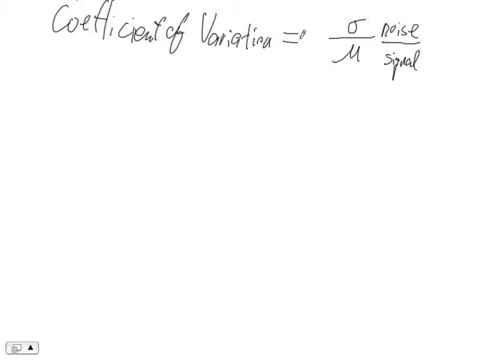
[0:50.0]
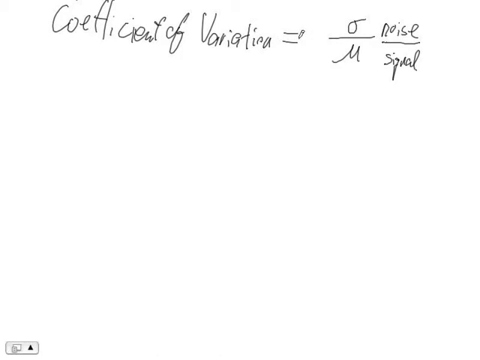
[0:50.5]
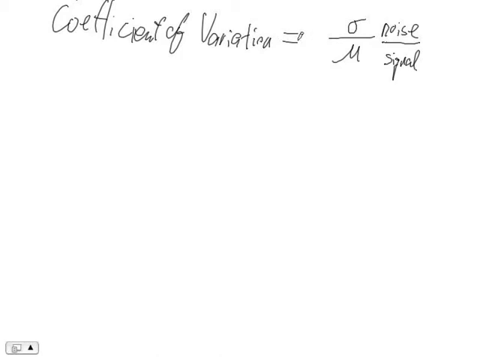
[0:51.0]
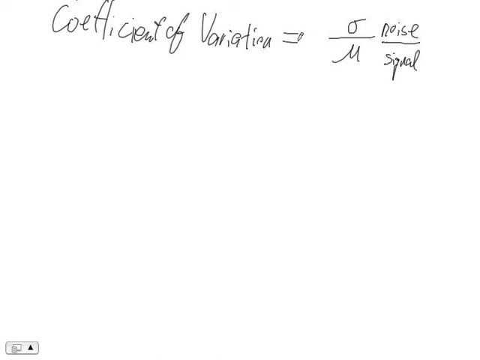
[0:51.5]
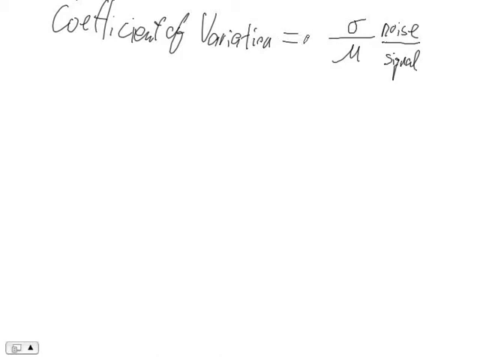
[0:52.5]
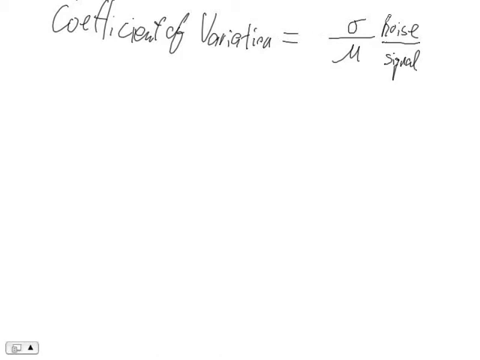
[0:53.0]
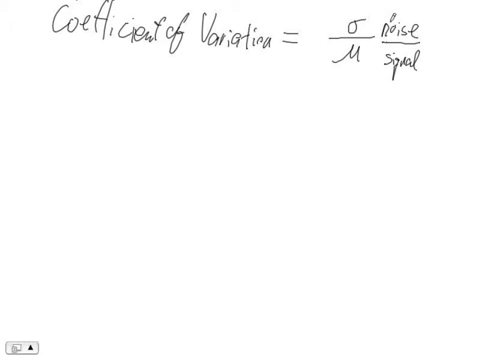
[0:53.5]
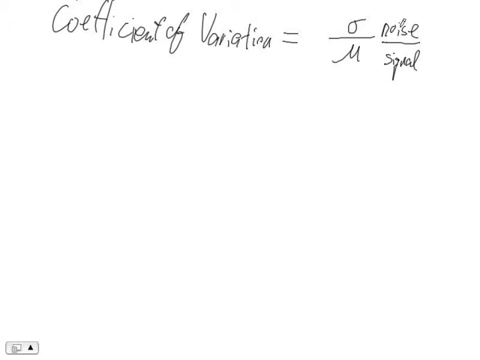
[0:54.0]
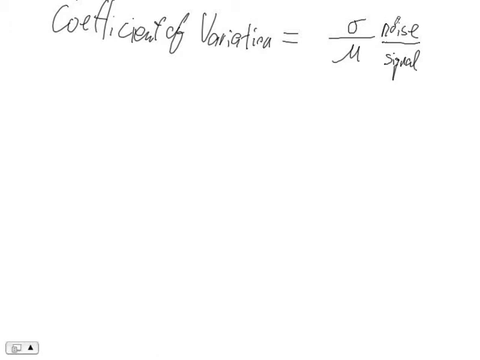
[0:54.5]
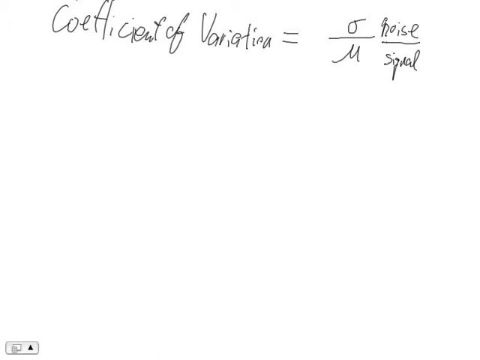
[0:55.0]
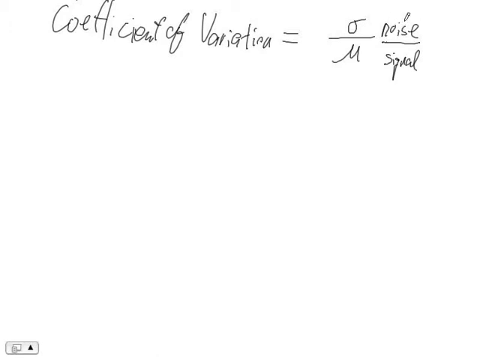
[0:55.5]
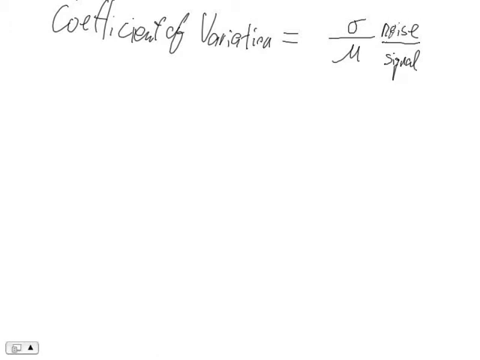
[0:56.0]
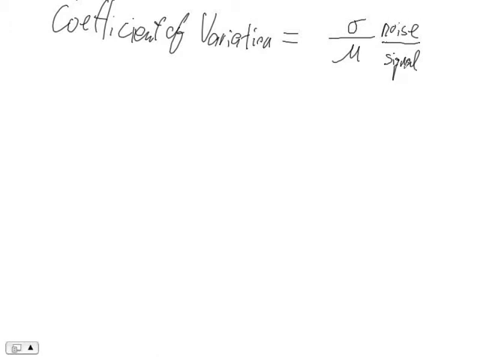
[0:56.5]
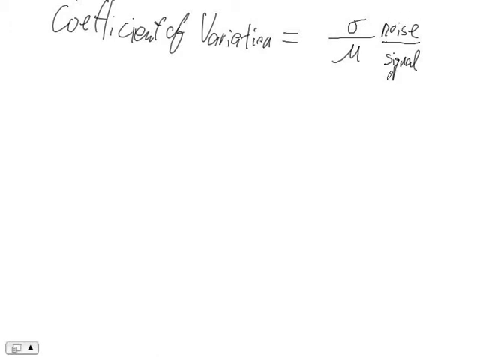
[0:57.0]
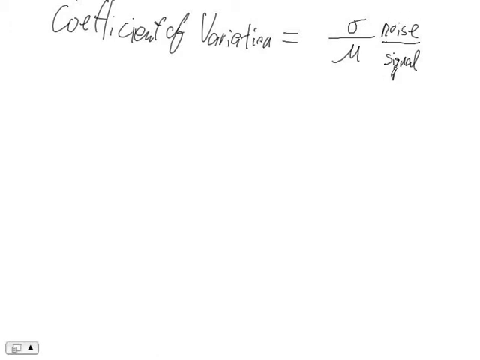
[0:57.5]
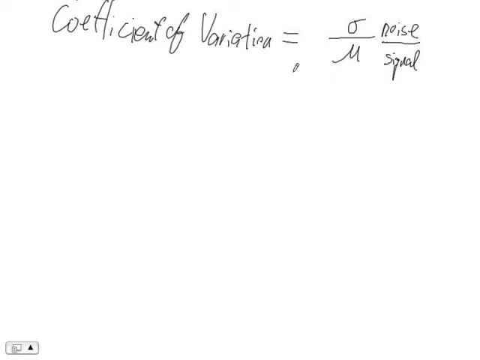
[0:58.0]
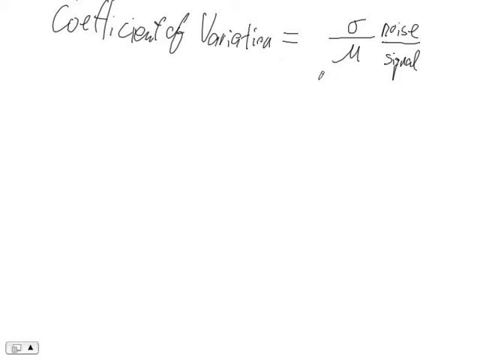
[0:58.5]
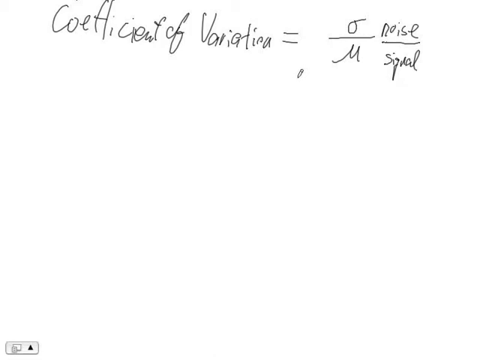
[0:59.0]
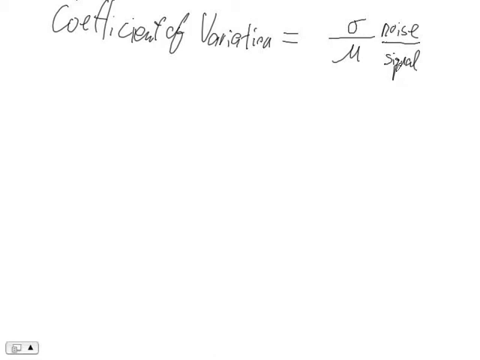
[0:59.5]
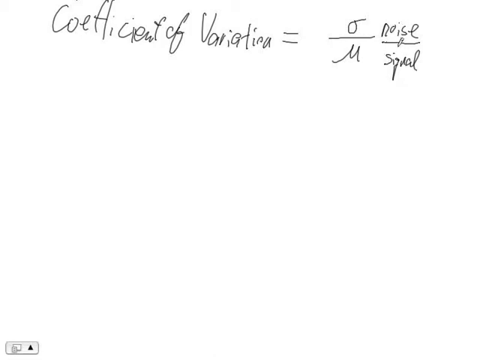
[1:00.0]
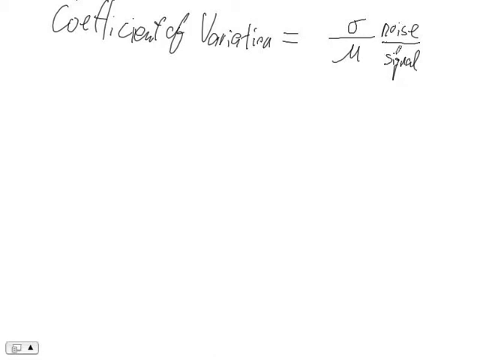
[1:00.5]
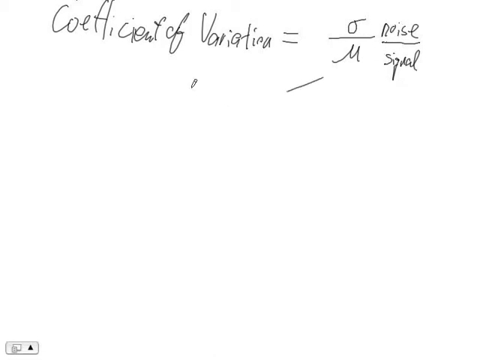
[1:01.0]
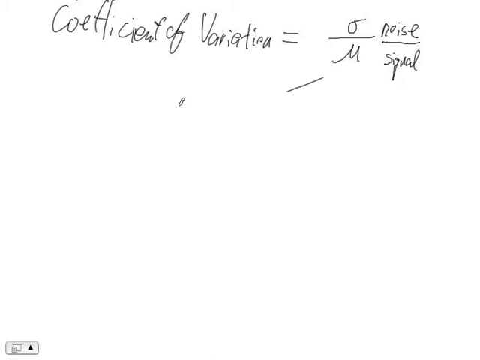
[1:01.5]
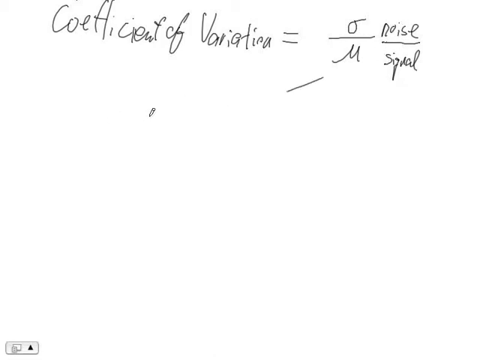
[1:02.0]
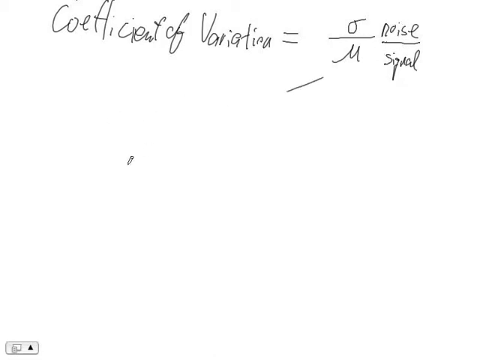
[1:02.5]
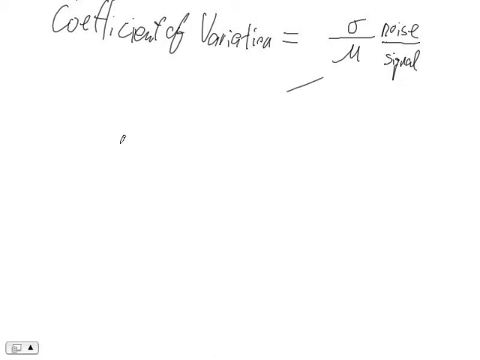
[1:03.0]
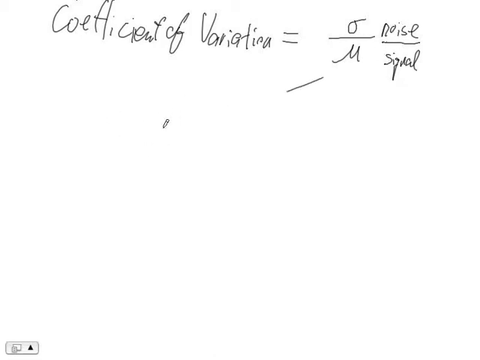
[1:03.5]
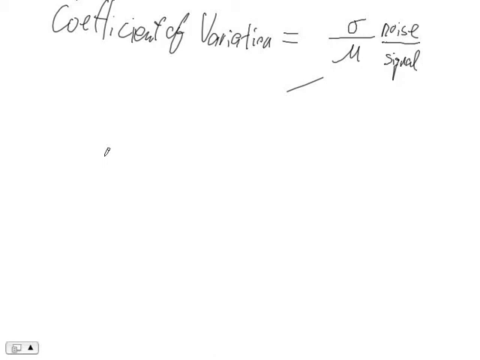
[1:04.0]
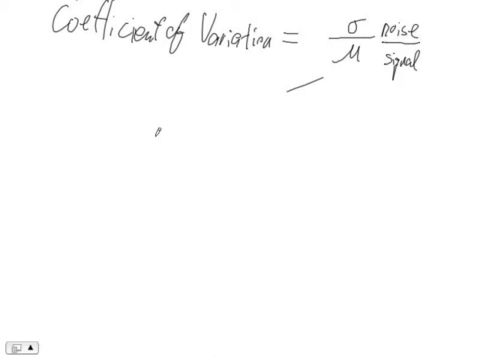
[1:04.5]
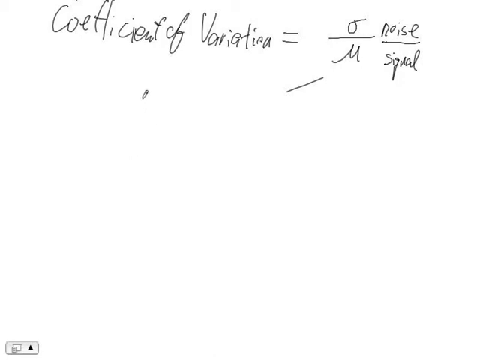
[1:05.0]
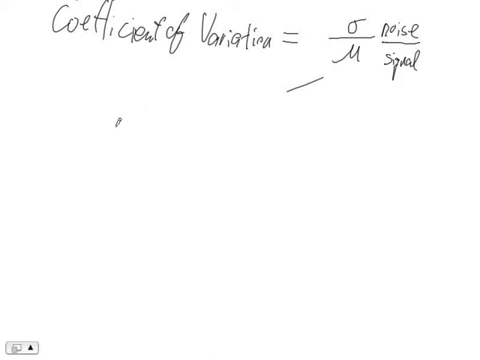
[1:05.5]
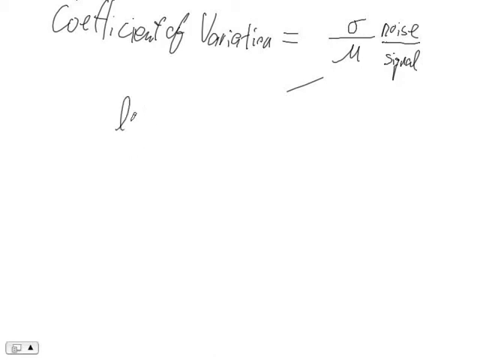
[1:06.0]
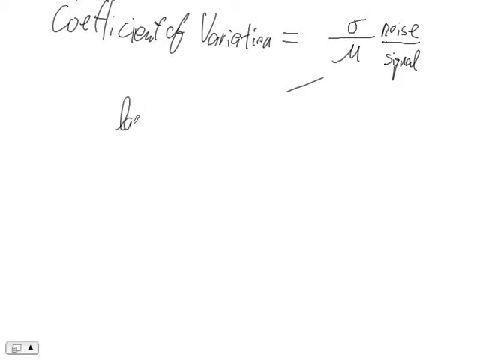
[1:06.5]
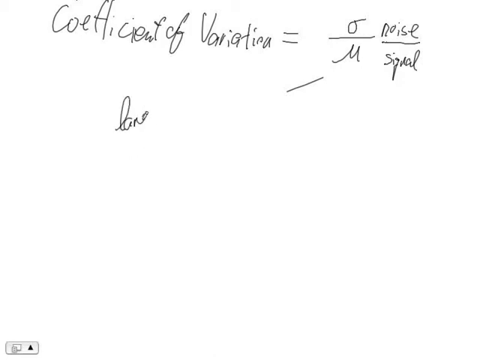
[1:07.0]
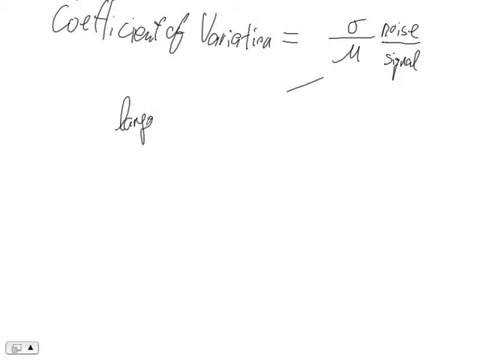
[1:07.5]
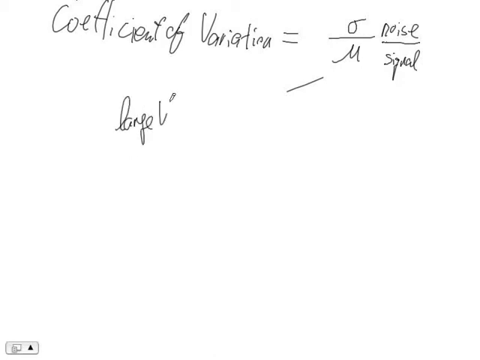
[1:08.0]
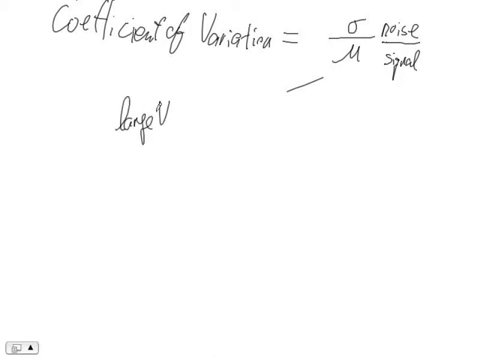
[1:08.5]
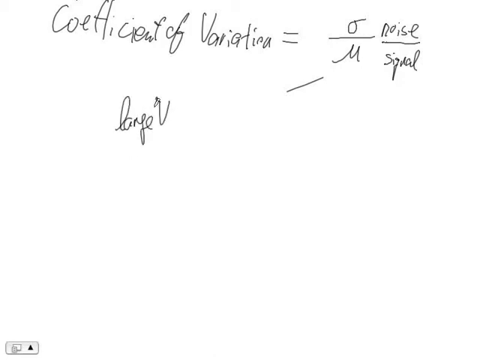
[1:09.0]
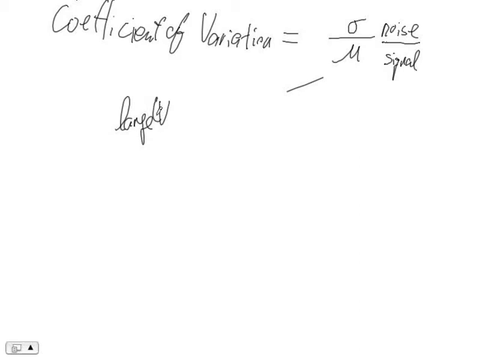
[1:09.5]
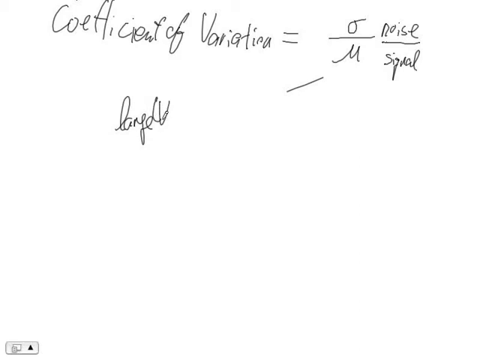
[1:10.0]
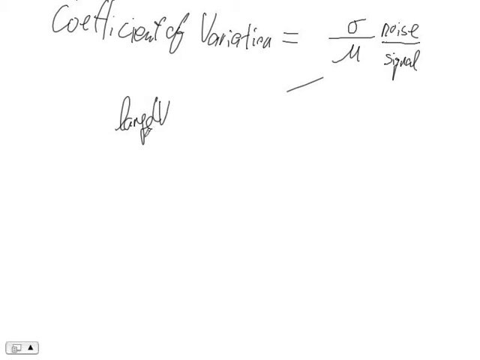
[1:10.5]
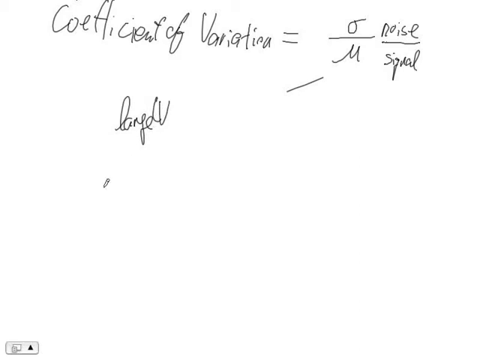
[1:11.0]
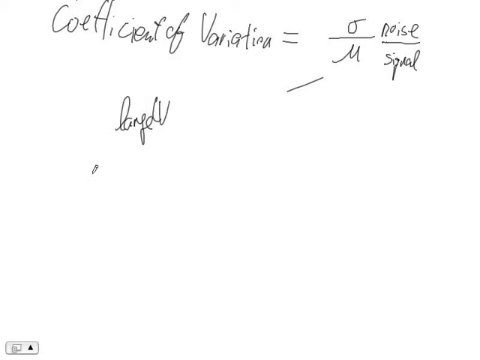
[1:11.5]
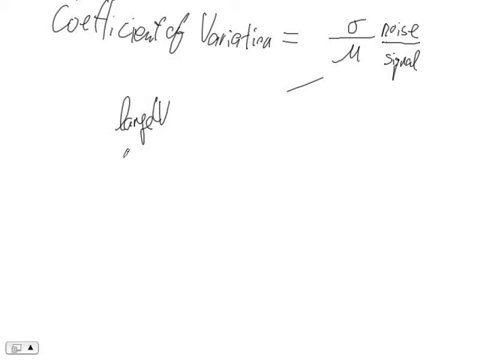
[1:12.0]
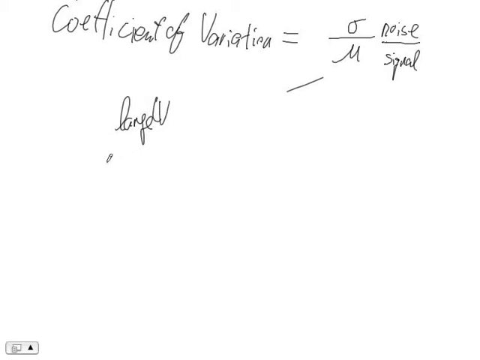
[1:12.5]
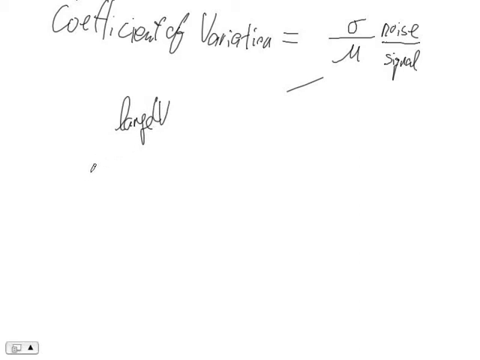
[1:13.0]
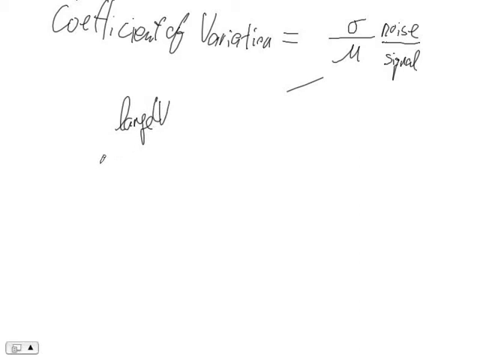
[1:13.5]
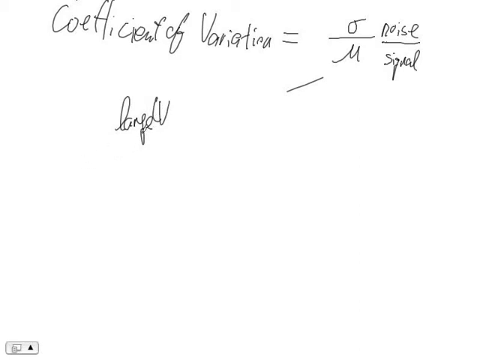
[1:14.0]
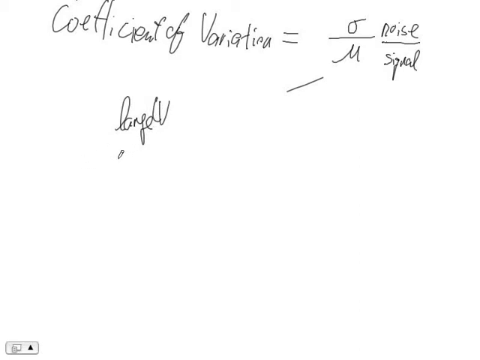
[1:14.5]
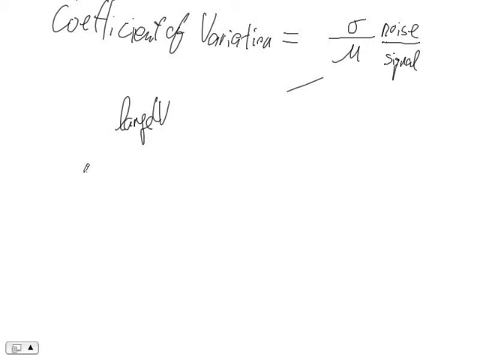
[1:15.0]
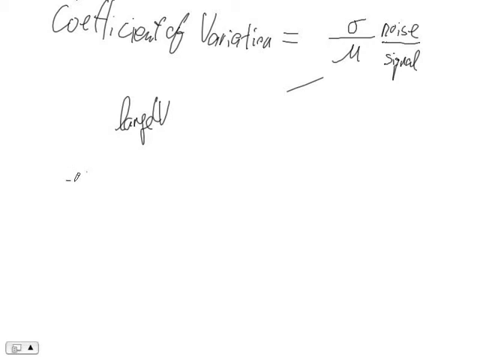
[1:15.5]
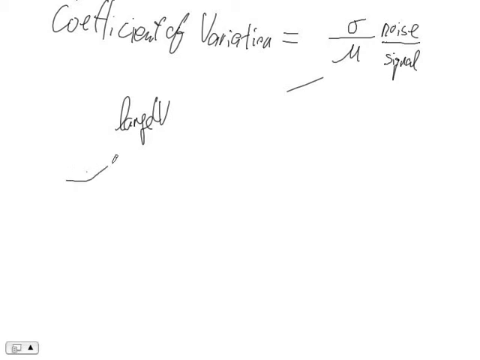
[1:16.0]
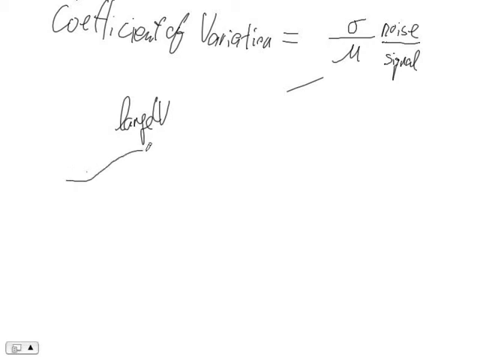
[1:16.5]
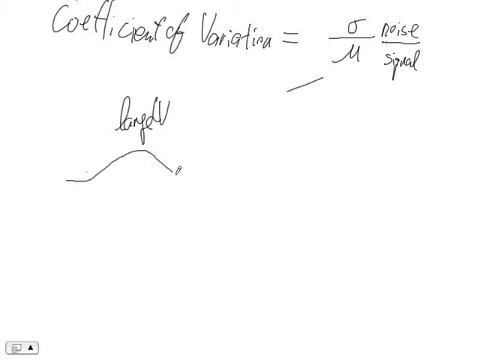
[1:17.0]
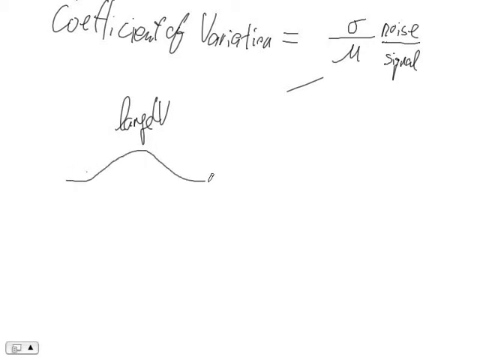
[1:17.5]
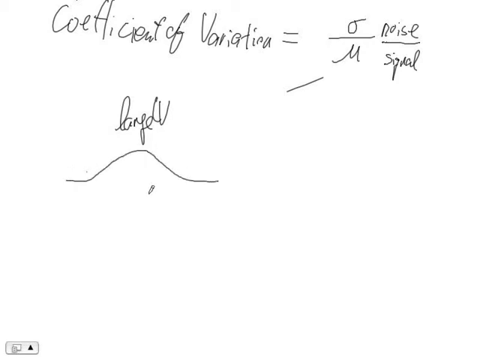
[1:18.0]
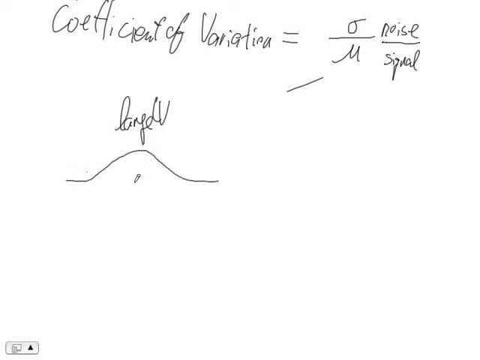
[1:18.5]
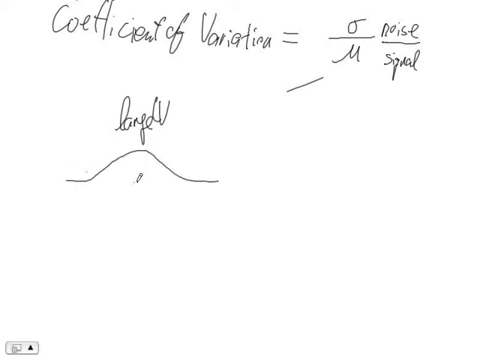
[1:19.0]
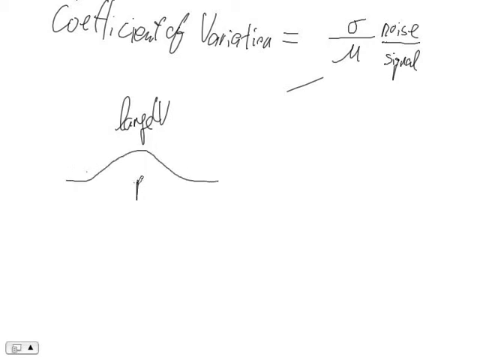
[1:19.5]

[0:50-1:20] "Noise divided by the signal" is displayed. The person moves around the formula, and a sign is dragged down. A large V is shown with a curve that goes upwards, and a sign that goes down is drawn. It seems to be a demonstration of some sort of the coefficient of variation, using drawings.